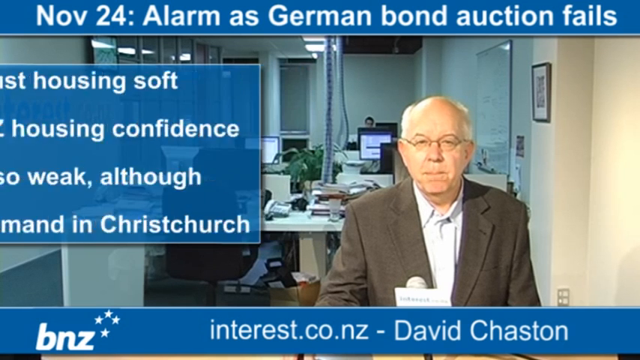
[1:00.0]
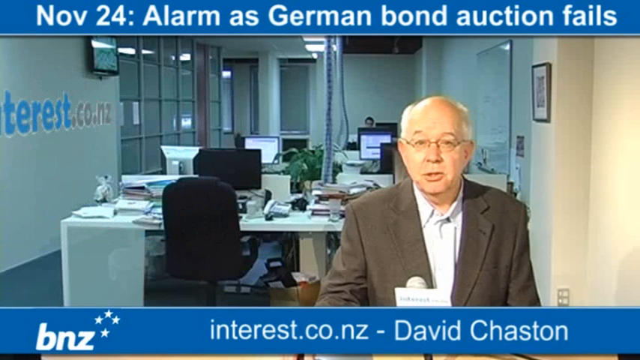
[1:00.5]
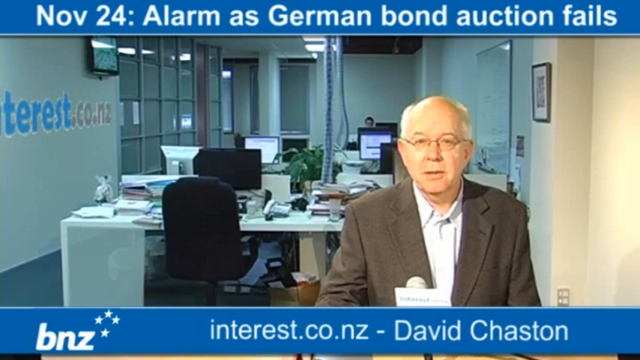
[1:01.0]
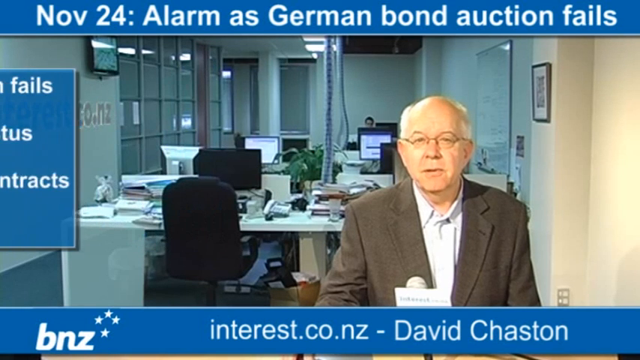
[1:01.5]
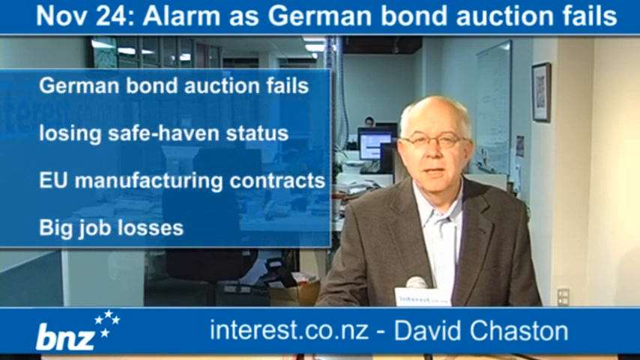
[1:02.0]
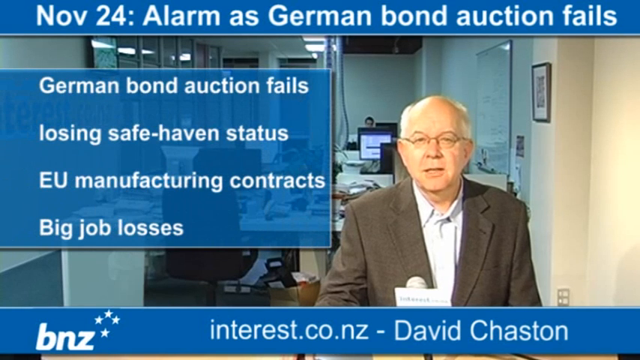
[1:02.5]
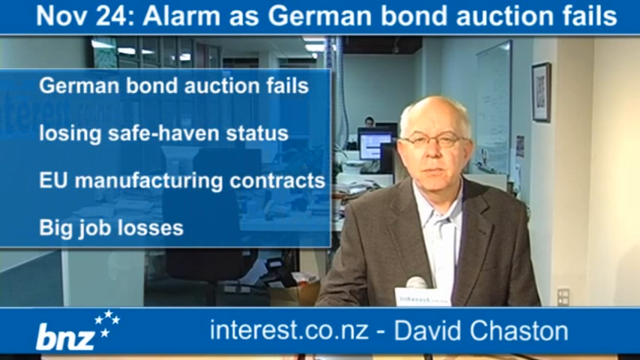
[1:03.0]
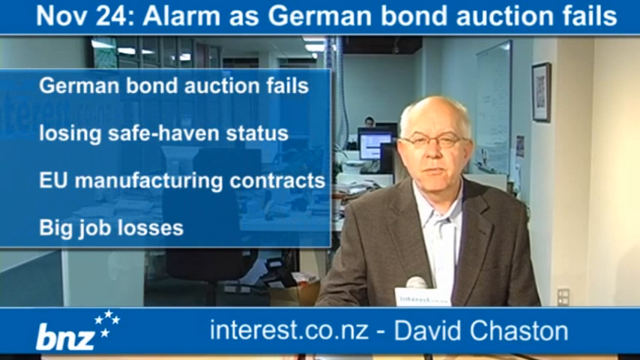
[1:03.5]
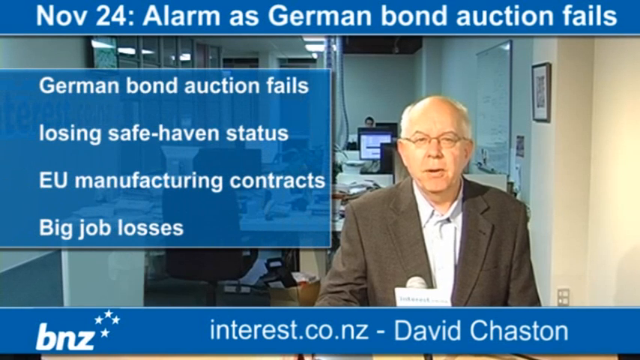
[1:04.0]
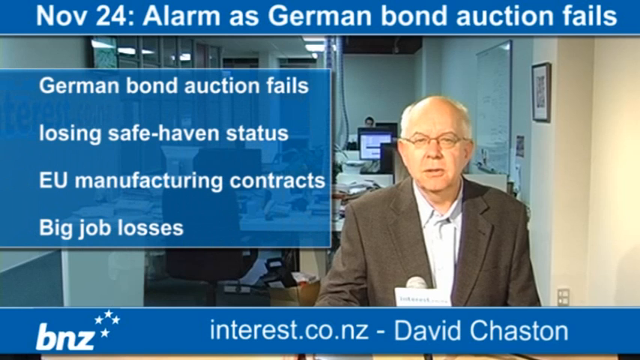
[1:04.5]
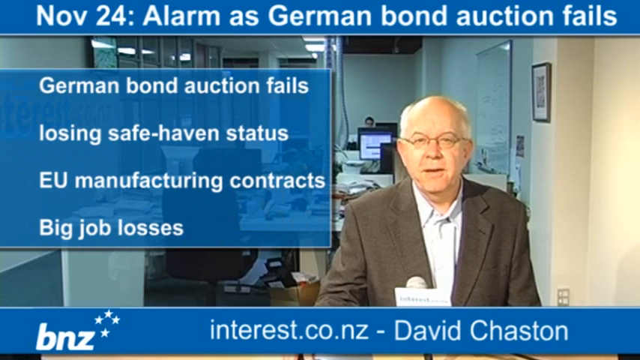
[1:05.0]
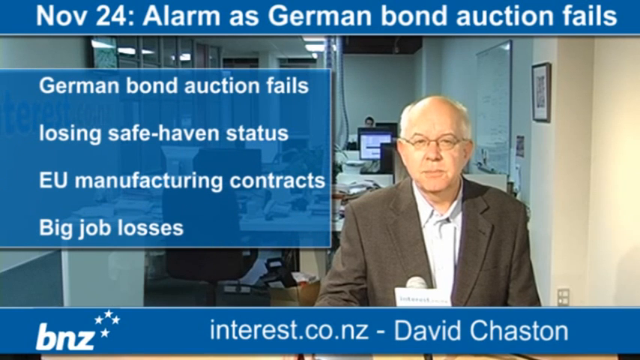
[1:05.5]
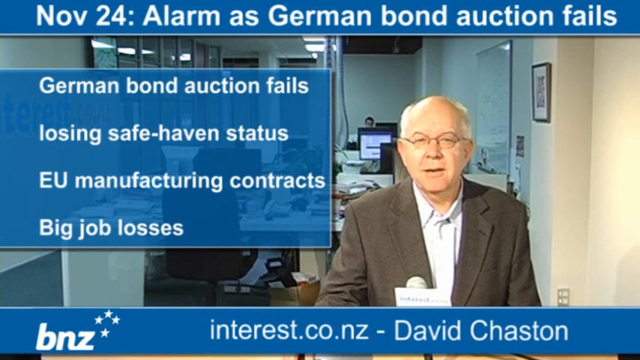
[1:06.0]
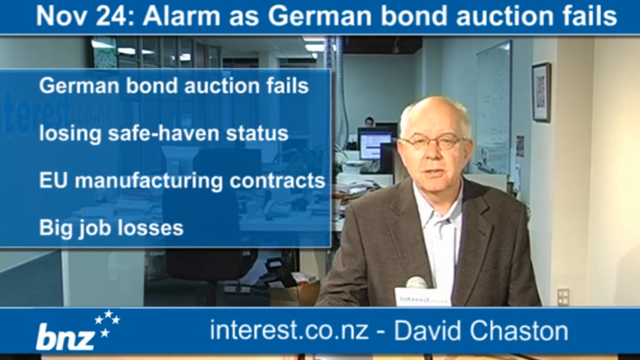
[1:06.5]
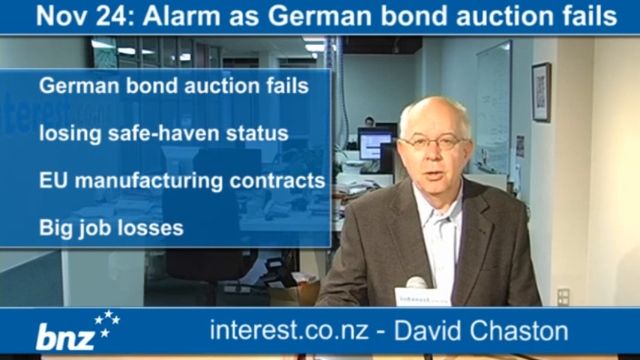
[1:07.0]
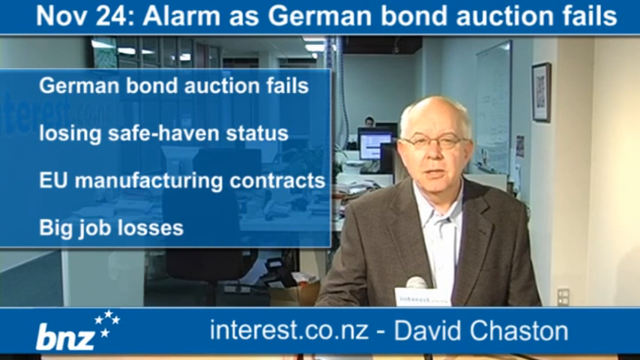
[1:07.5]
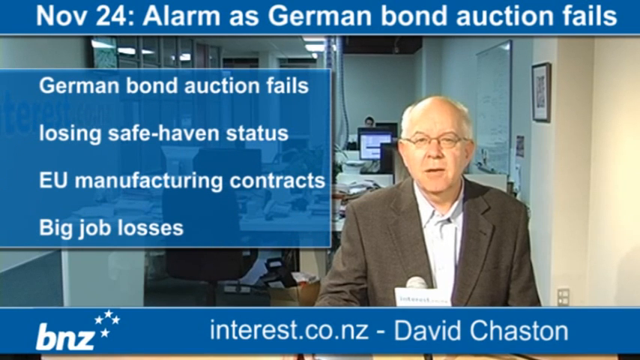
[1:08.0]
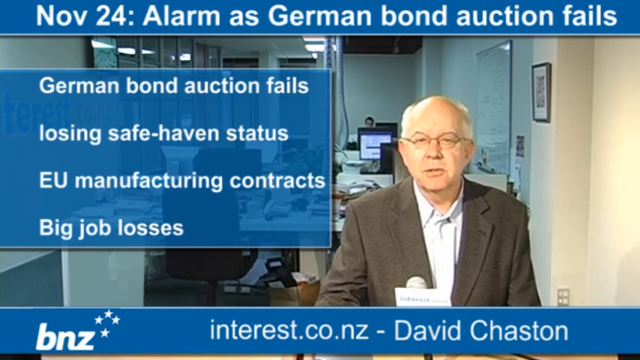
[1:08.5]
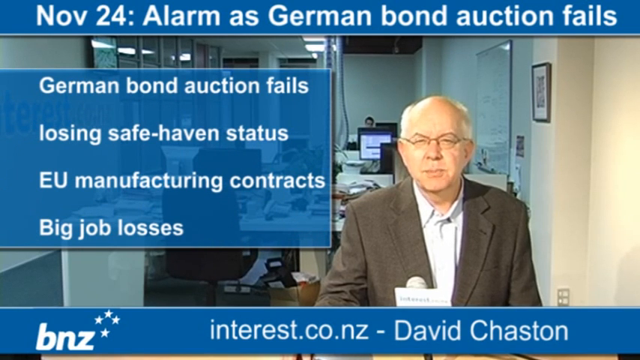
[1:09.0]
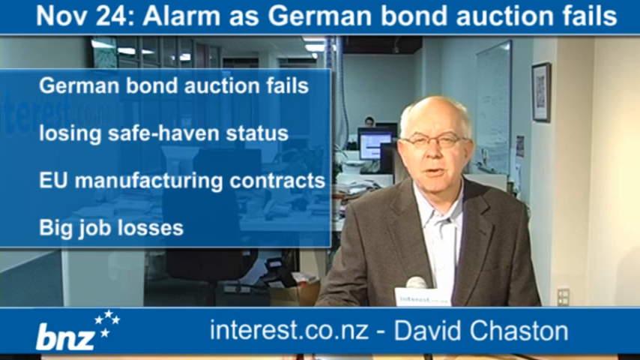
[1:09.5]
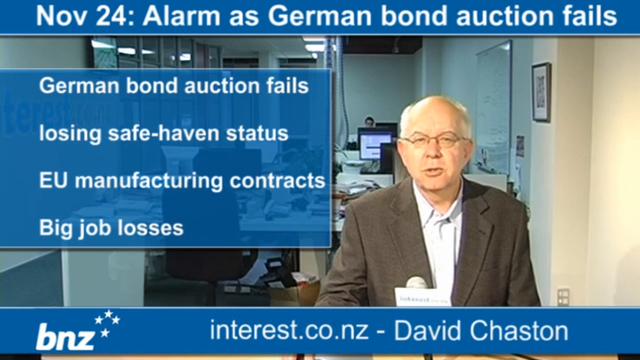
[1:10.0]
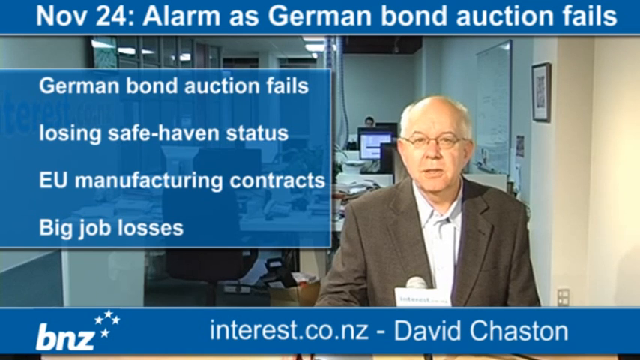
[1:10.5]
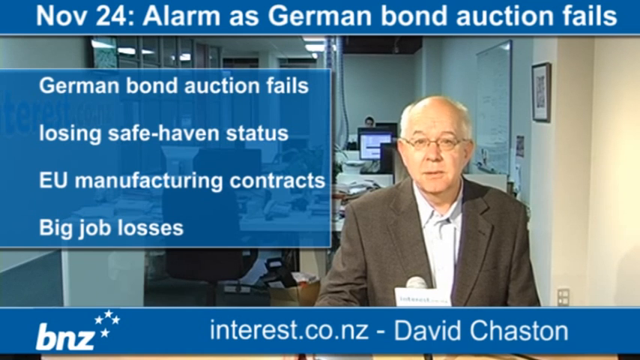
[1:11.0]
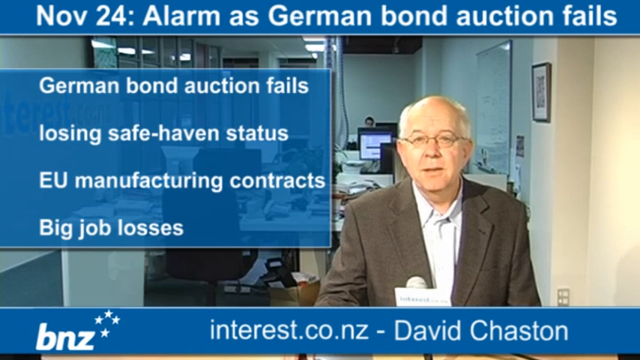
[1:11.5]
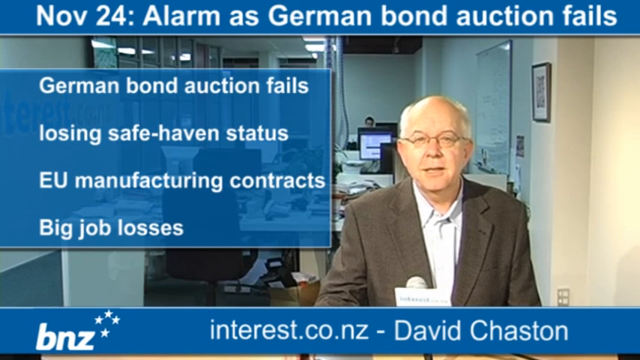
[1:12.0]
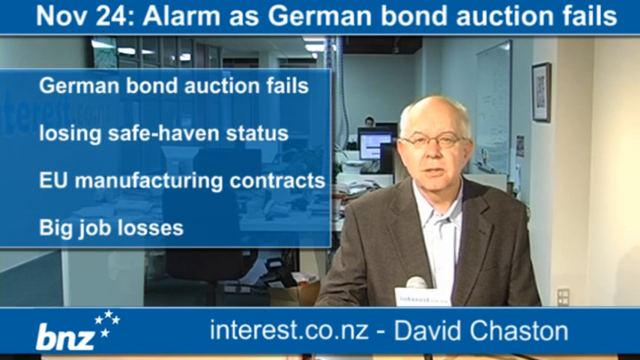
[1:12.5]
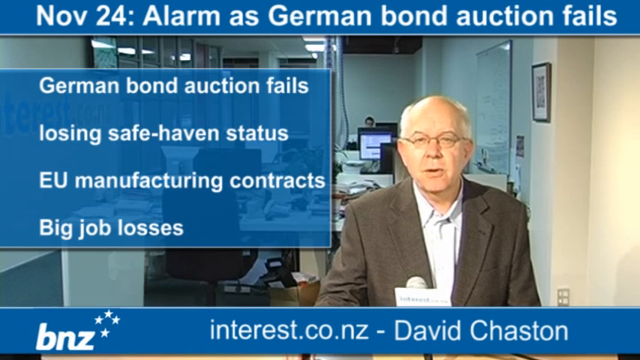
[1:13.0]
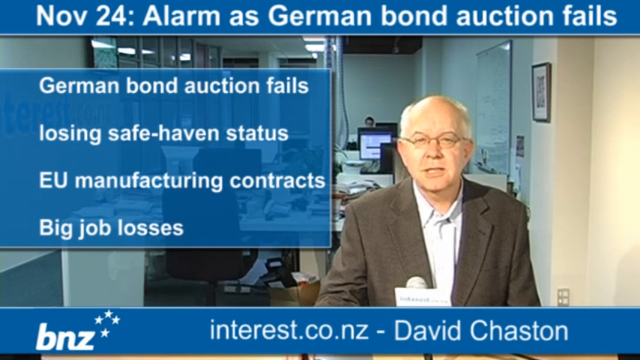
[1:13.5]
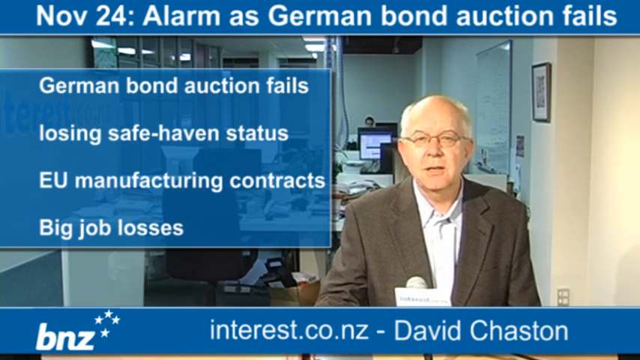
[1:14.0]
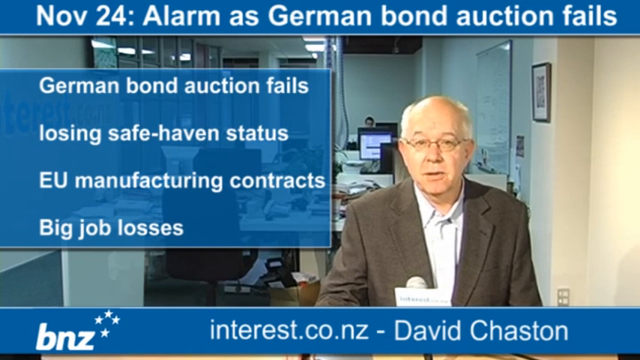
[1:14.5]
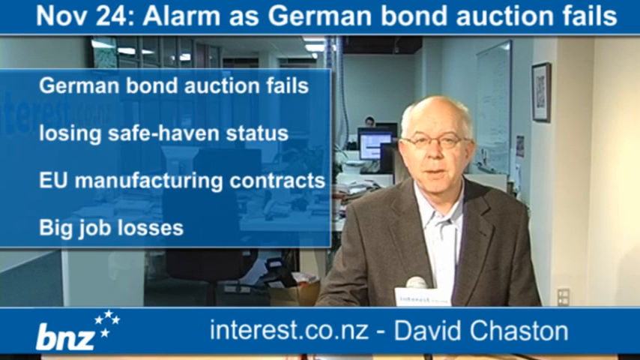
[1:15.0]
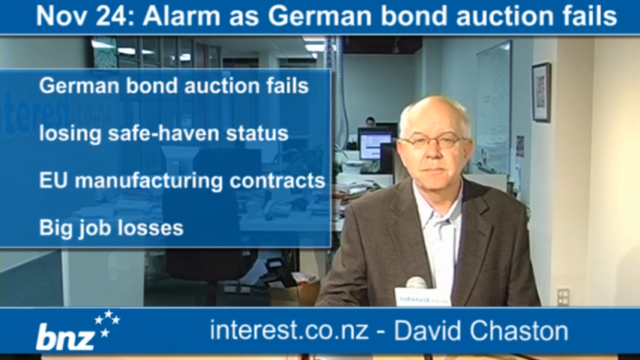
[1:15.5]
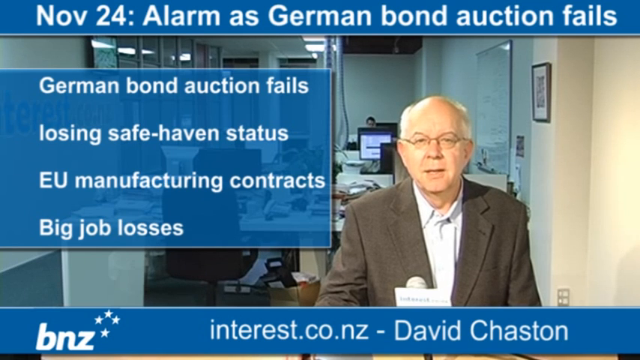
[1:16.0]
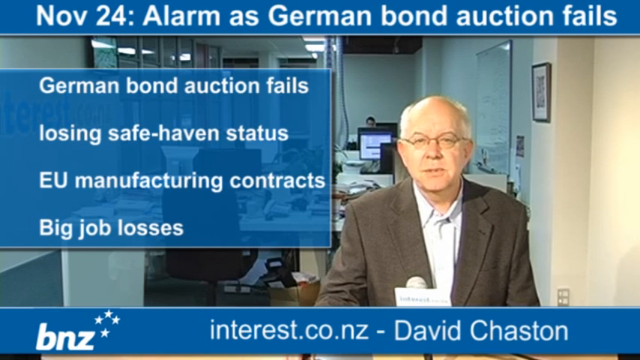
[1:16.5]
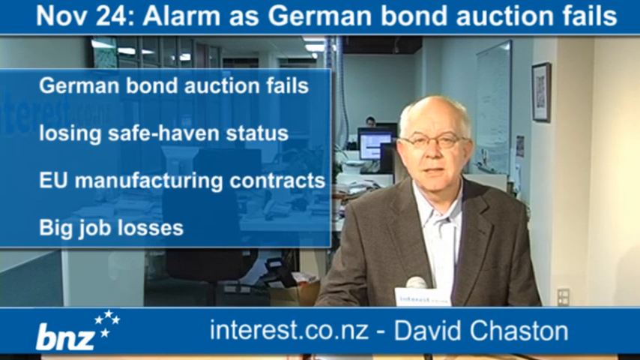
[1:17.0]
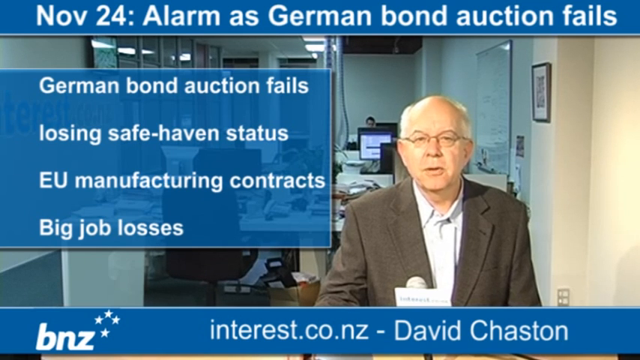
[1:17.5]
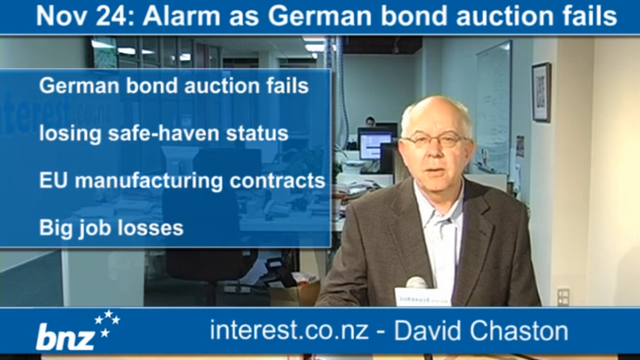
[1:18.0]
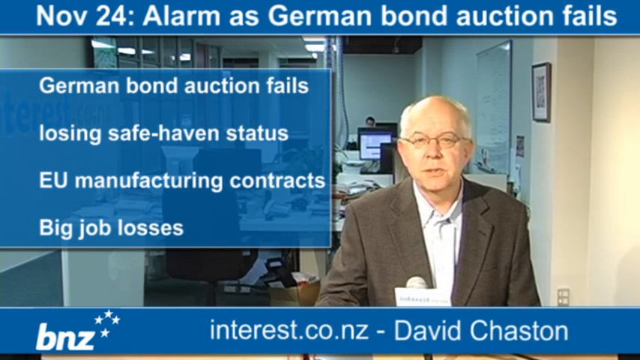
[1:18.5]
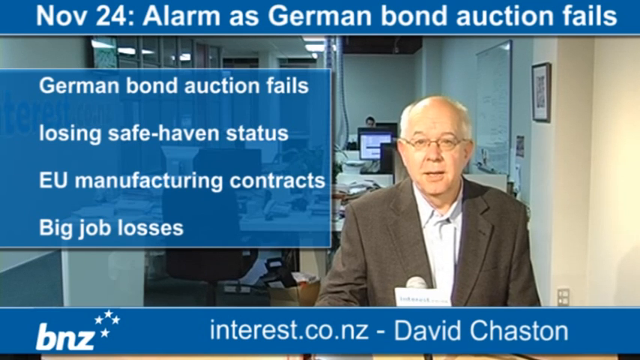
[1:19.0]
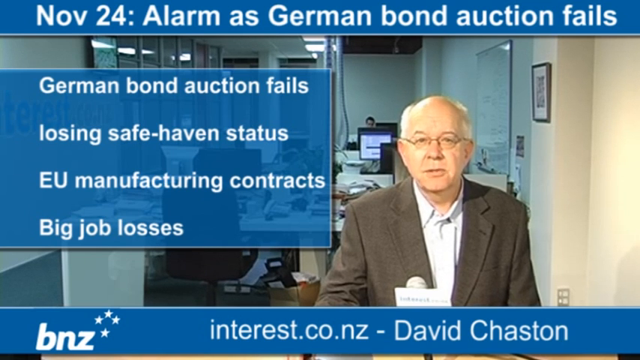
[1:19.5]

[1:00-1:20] The same old man continues speaking. On-screen text reads "German bond auction fails, losing safe haven status, EU manufacturing contract, big job losses," possibly bullet points of what he is talking about. There is no news footage and there are no pictures, only these captions. The video kind of looks old and is clearly independently made.